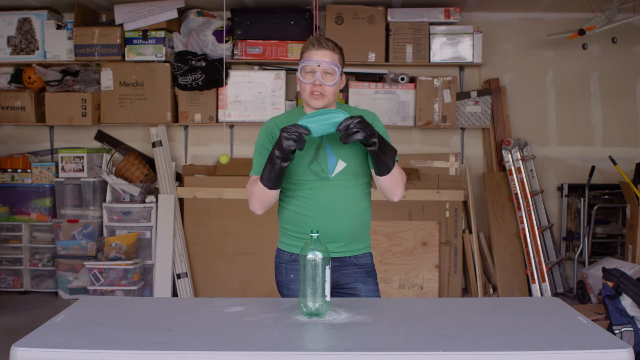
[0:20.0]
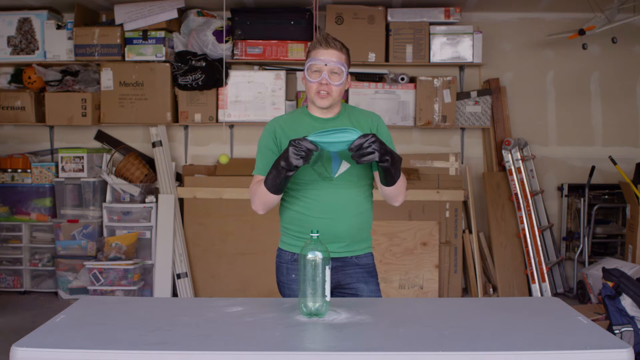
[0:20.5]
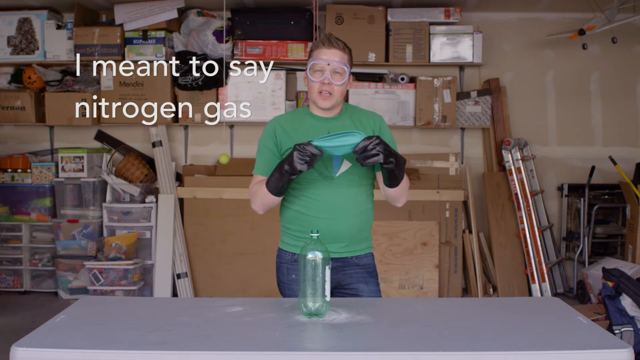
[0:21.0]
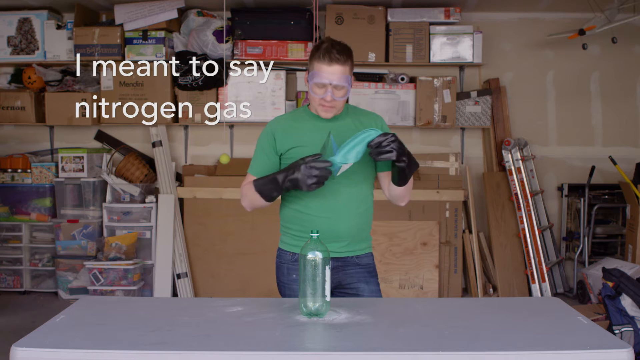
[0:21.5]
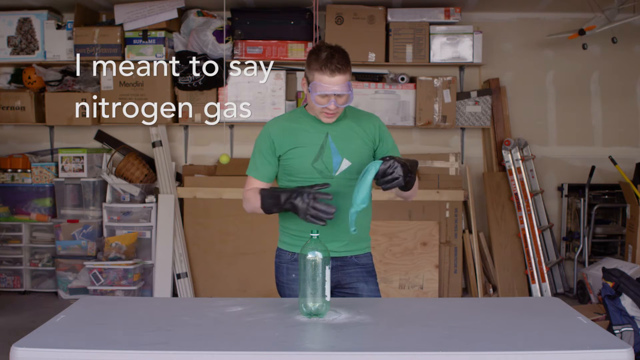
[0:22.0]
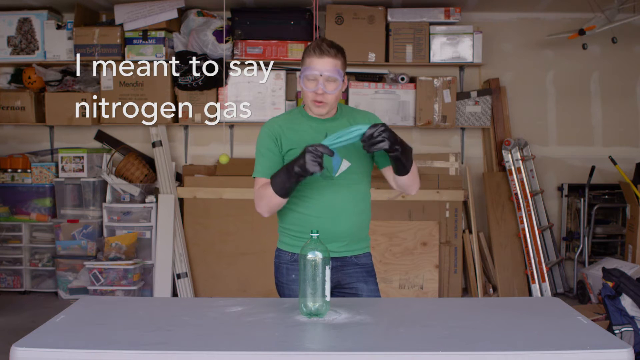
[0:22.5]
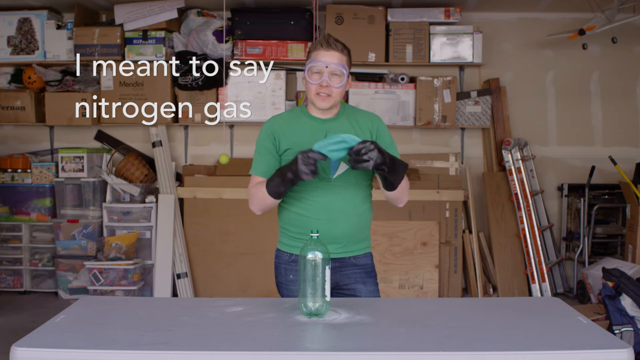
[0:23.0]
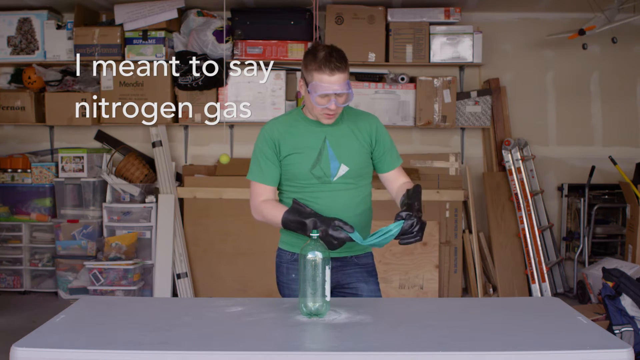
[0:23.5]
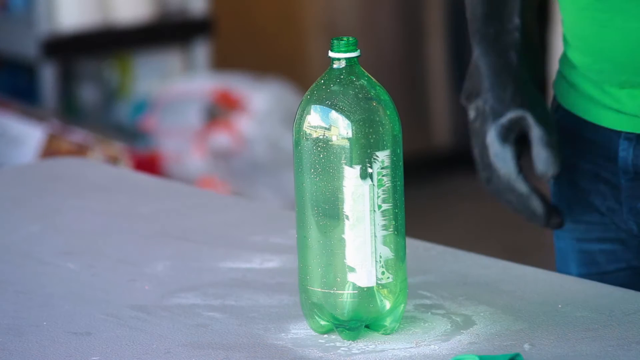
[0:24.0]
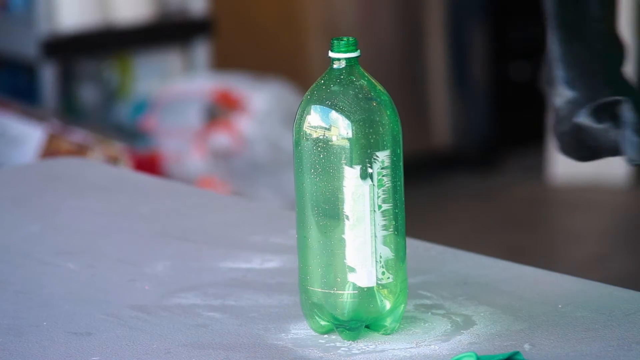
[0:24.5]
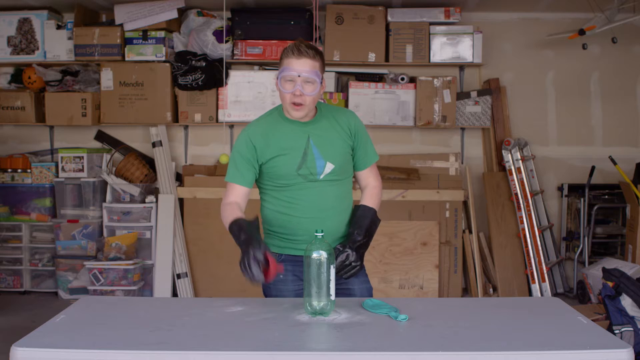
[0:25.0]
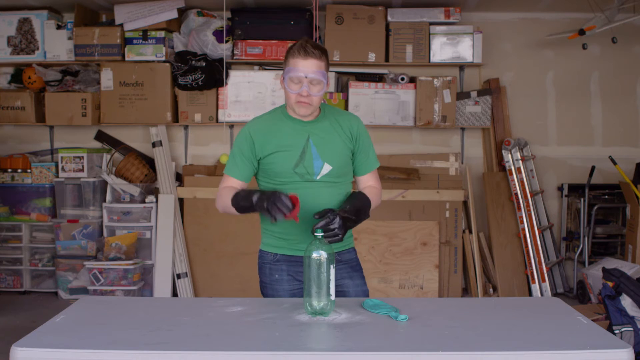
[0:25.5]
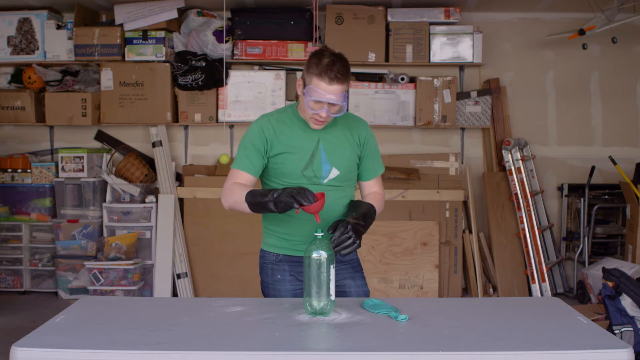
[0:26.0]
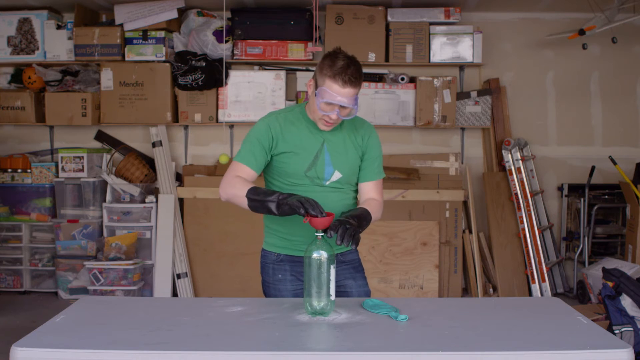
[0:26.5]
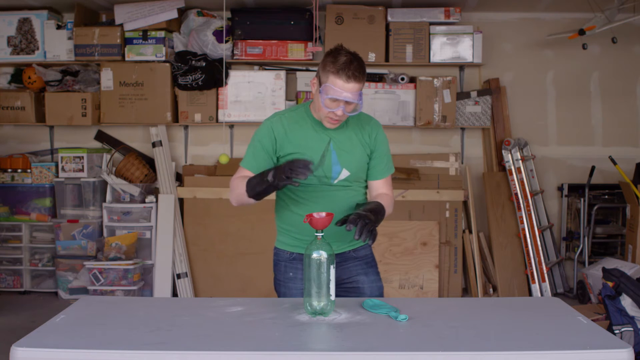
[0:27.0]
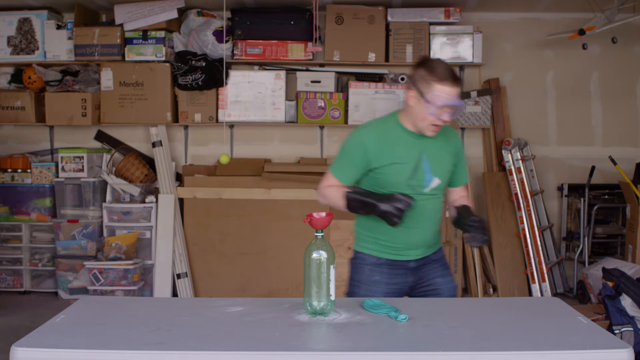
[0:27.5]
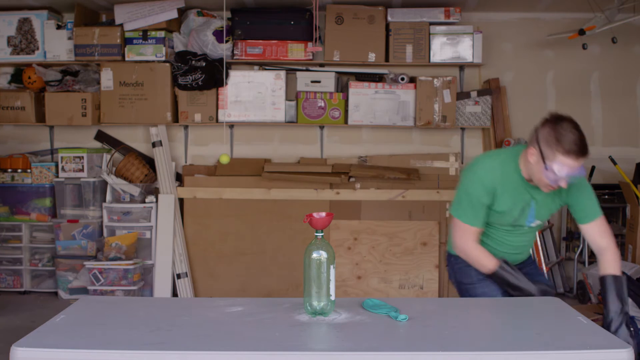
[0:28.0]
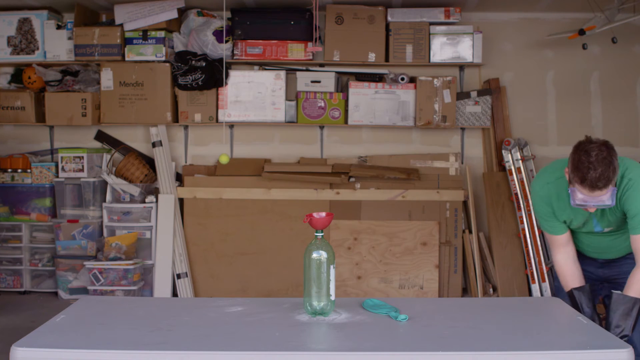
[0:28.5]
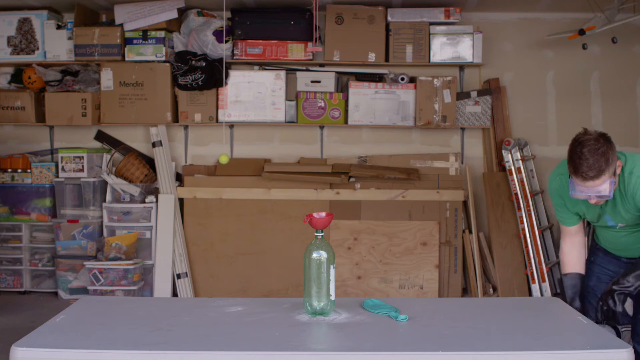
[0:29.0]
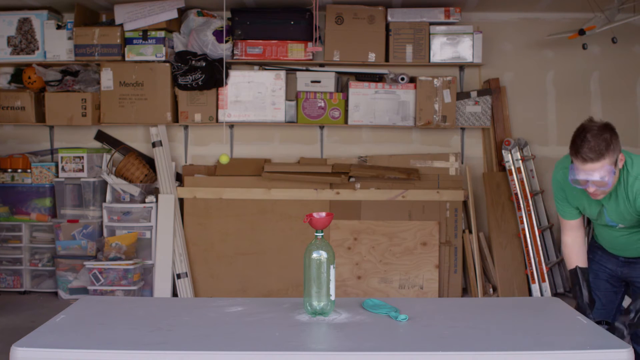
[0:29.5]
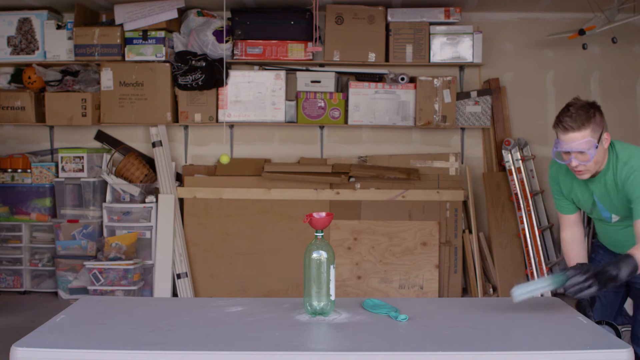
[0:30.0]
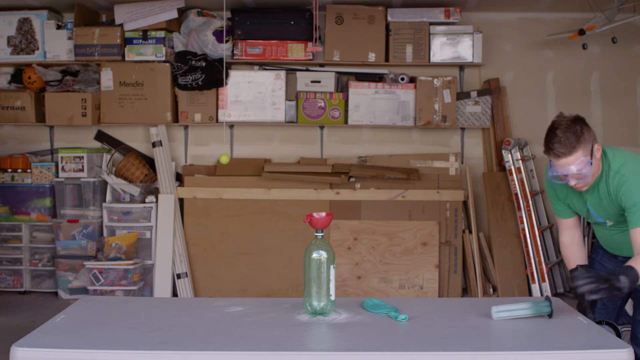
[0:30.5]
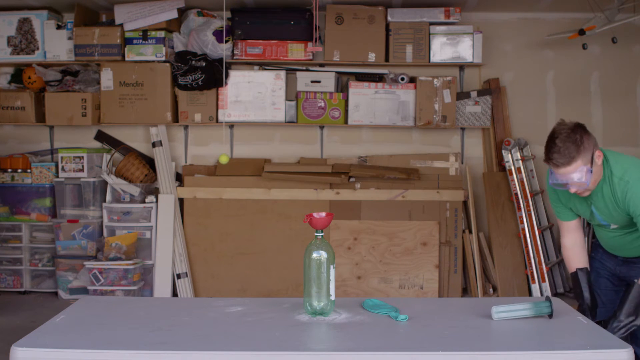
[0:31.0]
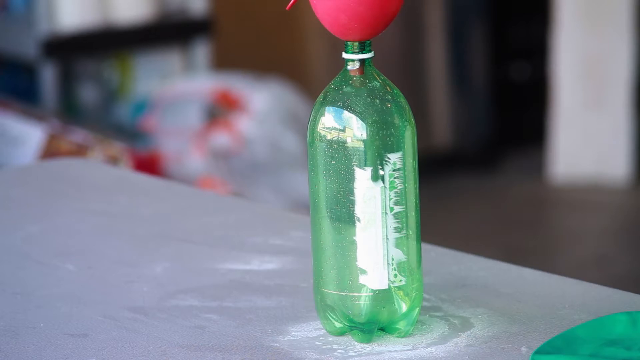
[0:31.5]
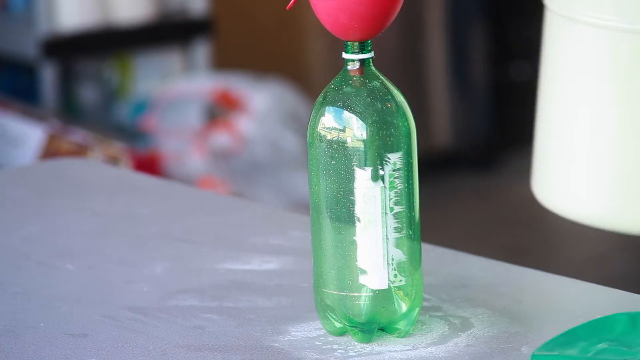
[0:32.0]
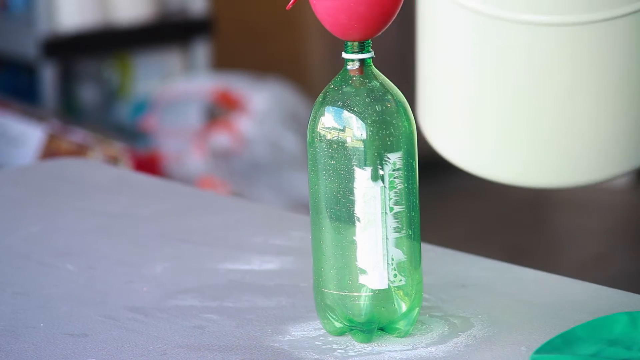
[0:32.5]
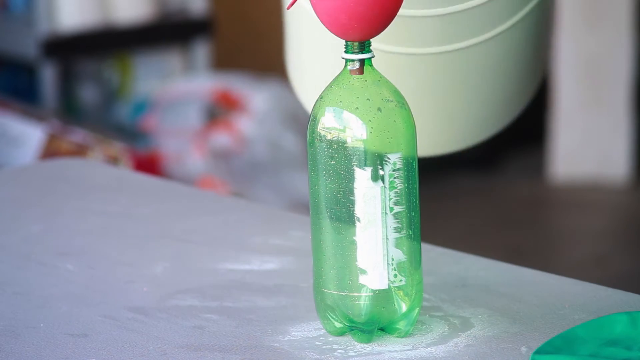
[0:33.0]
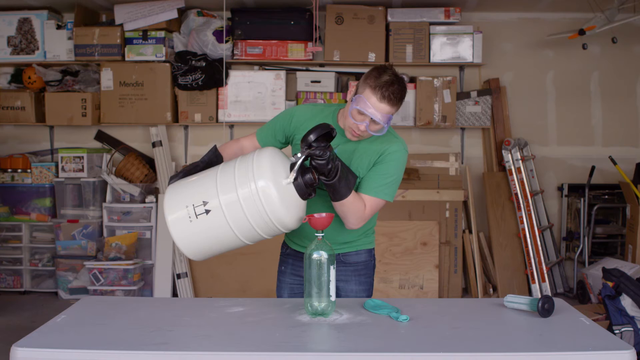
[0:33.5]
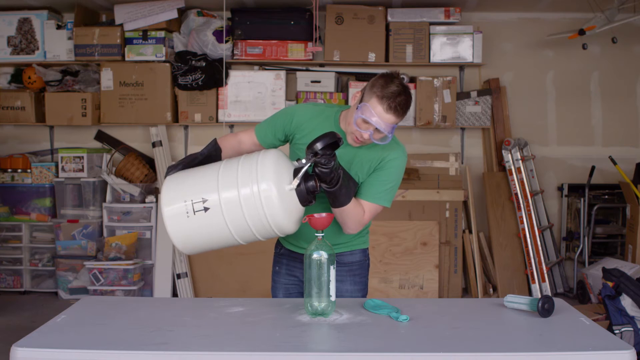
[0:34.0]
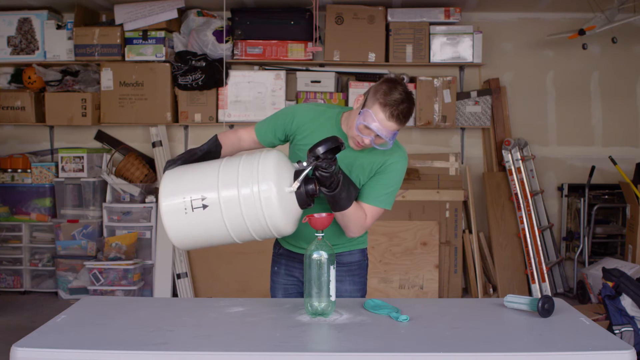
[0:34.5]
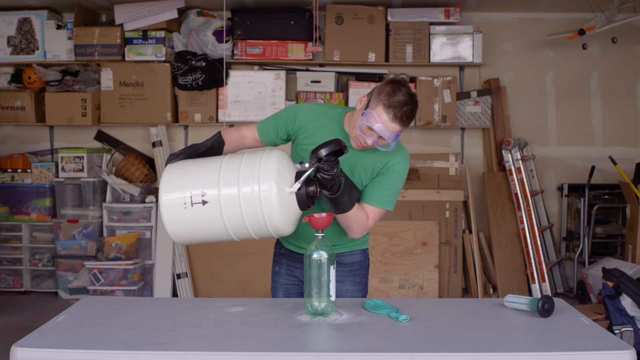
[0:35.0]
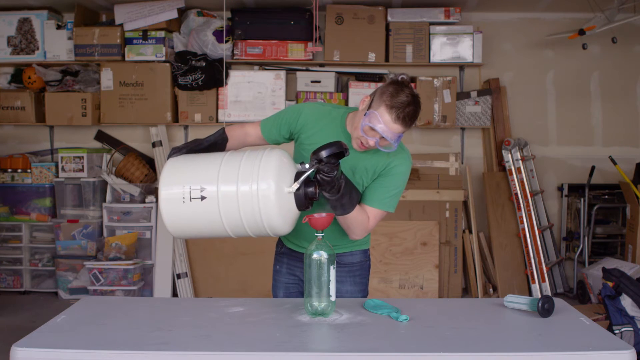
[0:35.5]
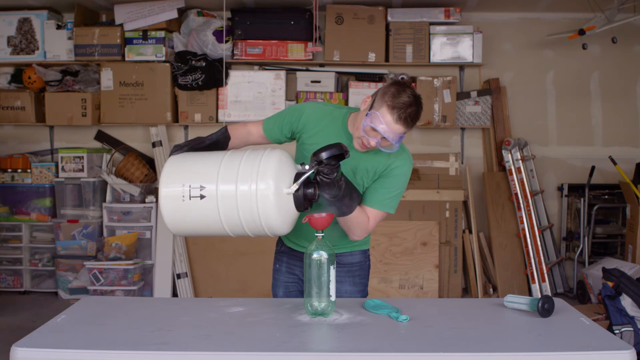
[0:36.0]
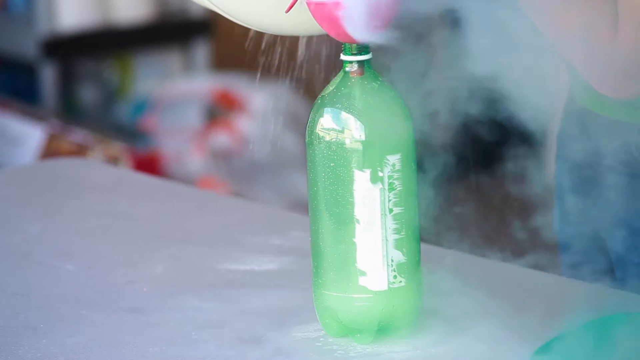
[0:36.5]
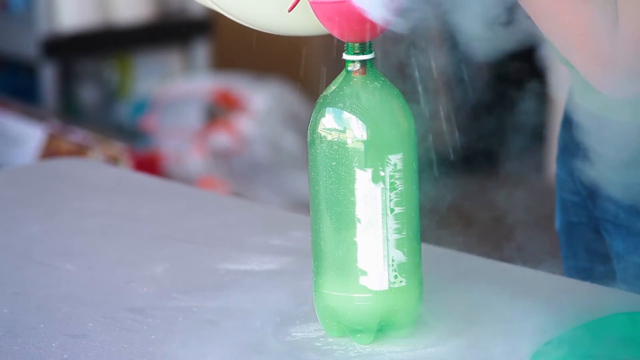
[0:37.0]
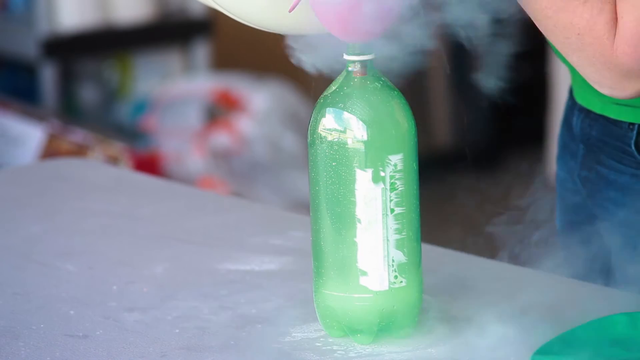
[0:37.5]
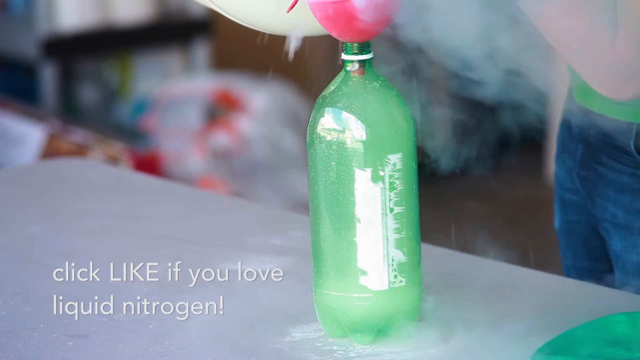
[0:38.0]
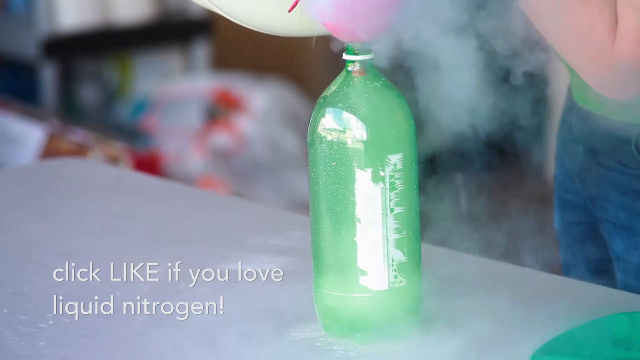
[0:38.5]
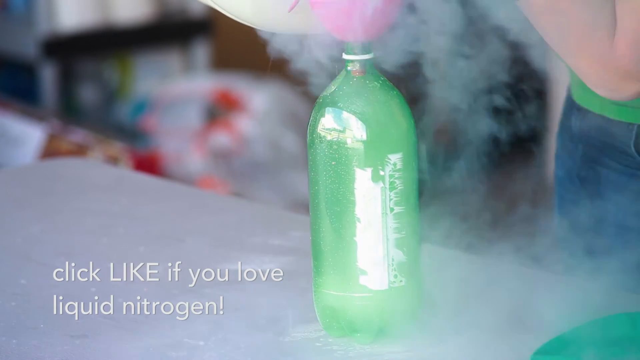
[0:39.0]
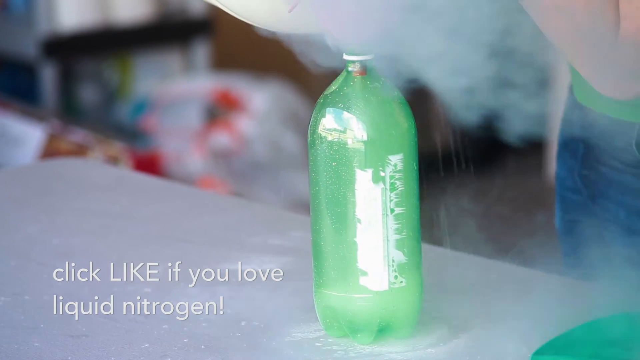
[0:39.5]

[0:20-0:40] A man in a green t-shirt stands by a table with an empty bottle on it. A red funnel is put into the bottle, and the man takes a container of liquid with smoke coming out of it, apparently liquid nitrogen. He pours the liquid through the funnel into the empty bottle lying on the table, talking directly to the audience as he does so. He then takes a mask-like object and tries to cover the bottle with some other material.